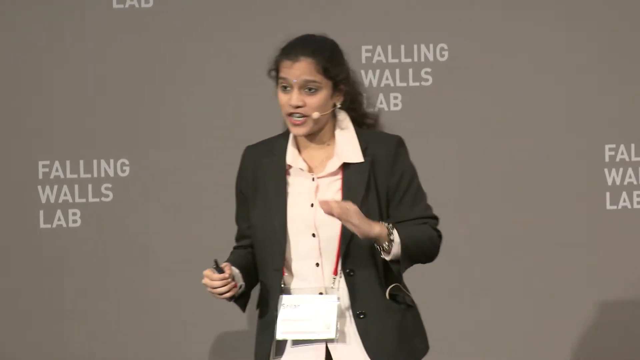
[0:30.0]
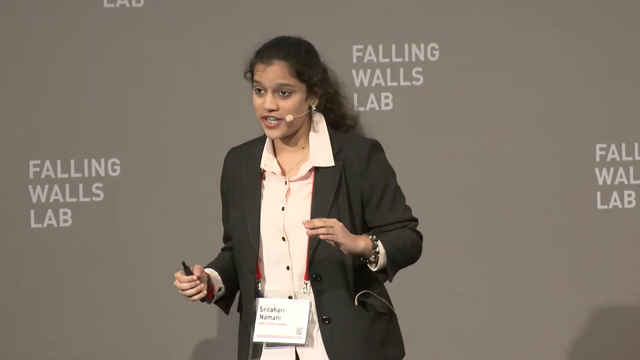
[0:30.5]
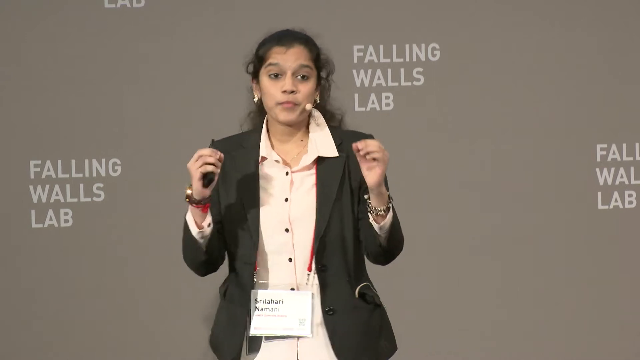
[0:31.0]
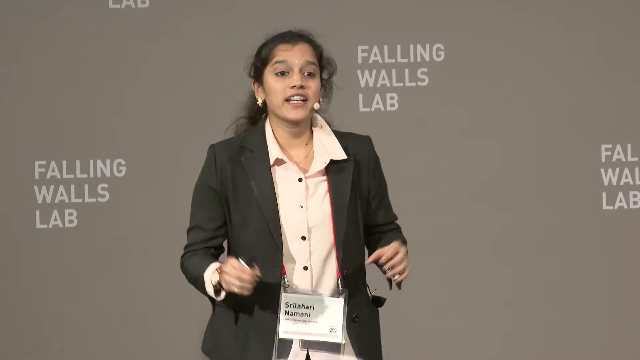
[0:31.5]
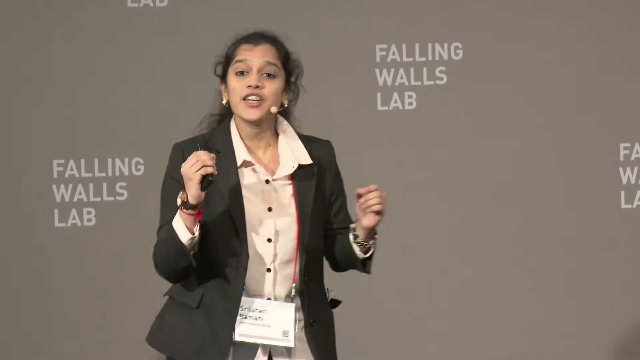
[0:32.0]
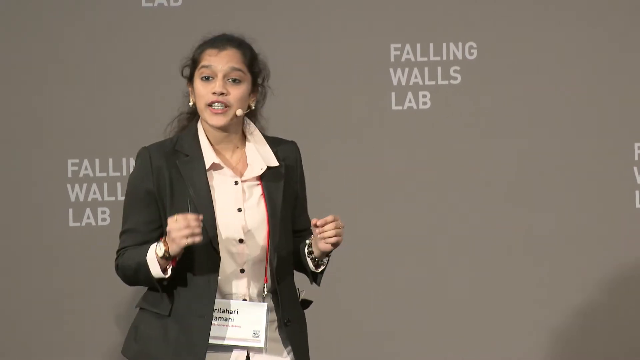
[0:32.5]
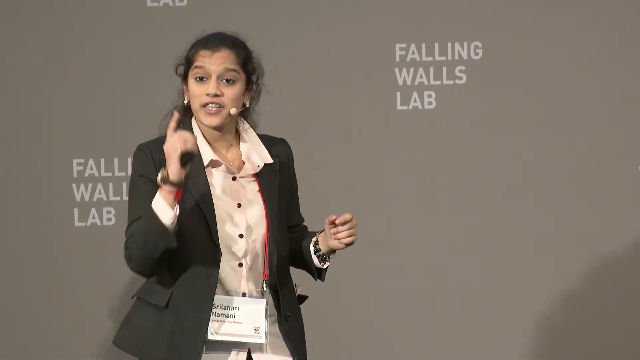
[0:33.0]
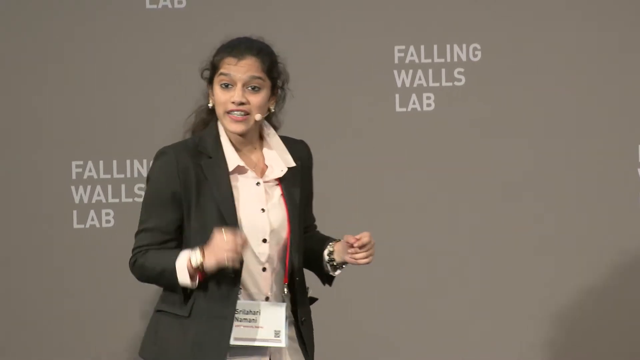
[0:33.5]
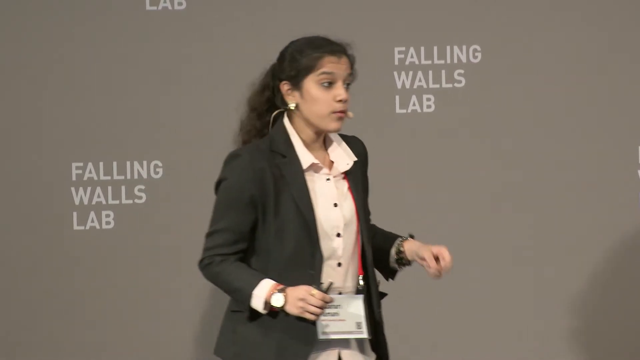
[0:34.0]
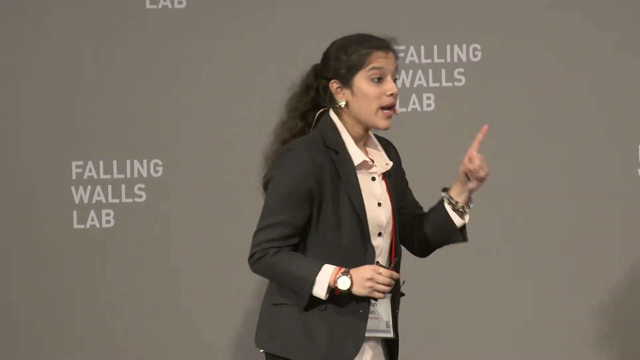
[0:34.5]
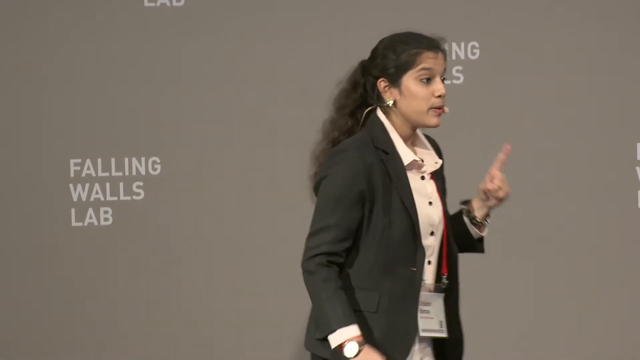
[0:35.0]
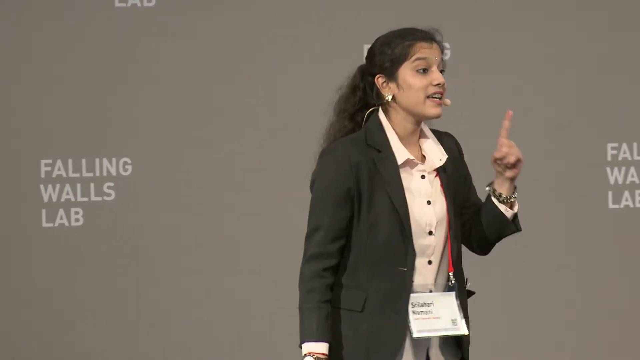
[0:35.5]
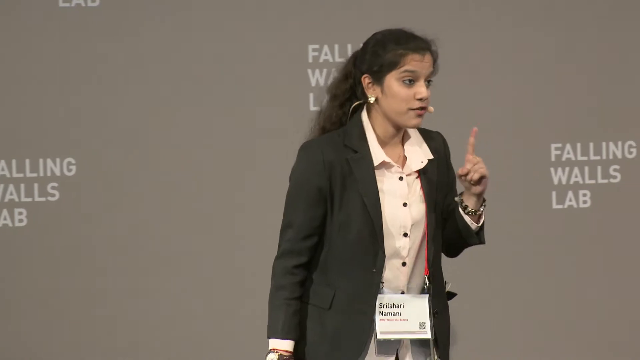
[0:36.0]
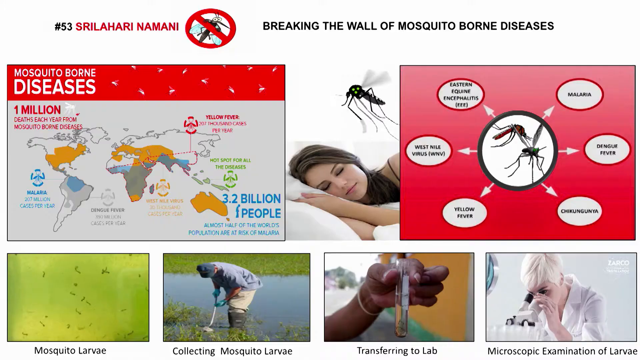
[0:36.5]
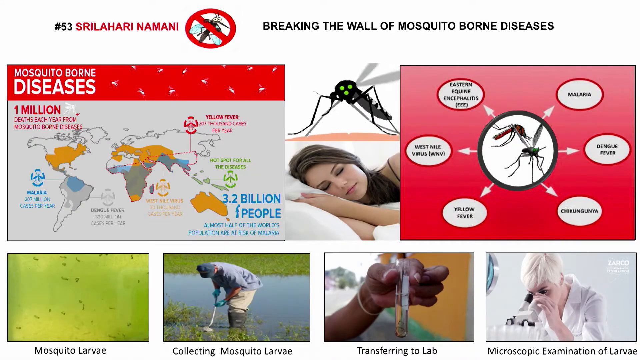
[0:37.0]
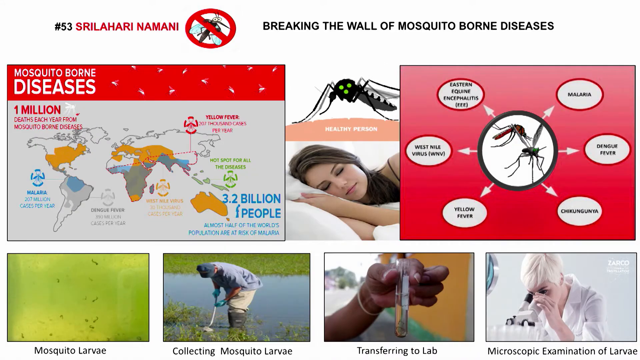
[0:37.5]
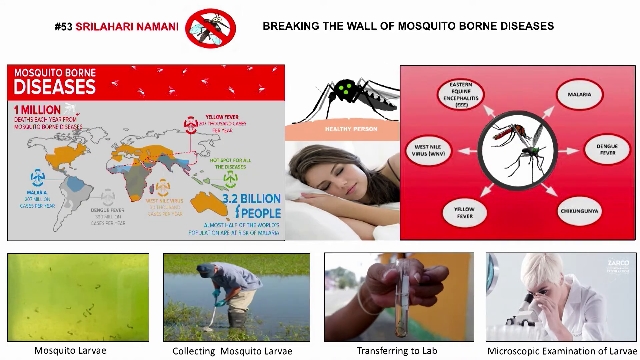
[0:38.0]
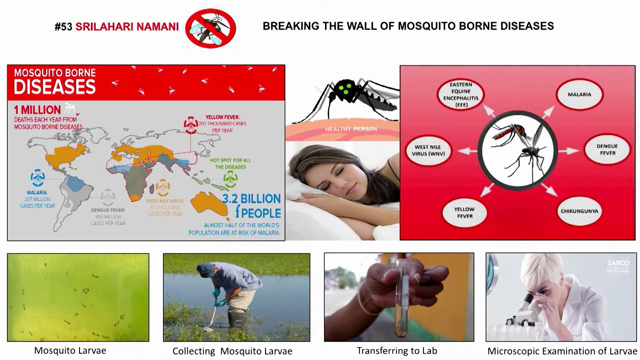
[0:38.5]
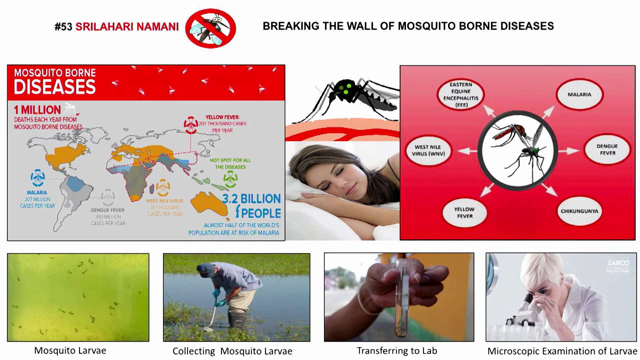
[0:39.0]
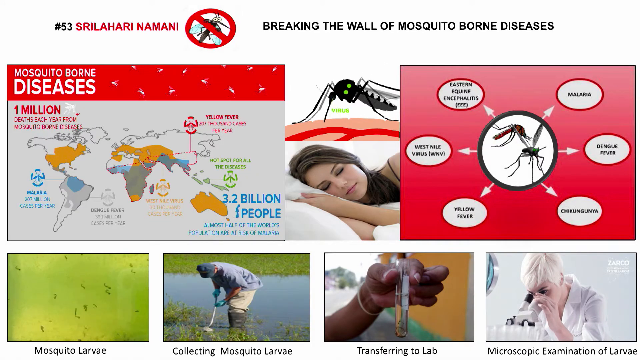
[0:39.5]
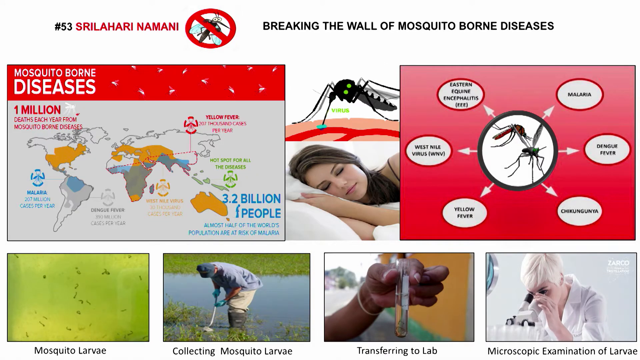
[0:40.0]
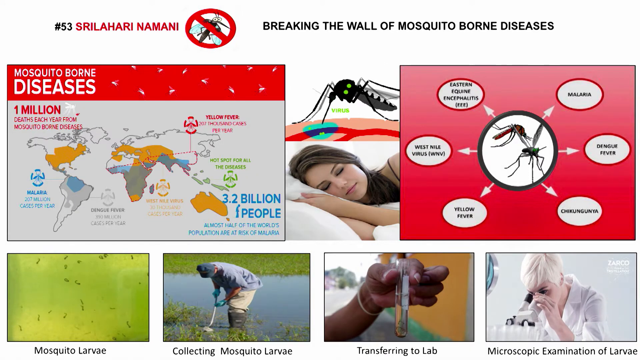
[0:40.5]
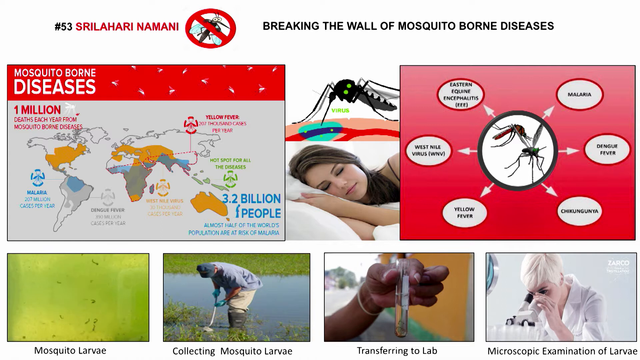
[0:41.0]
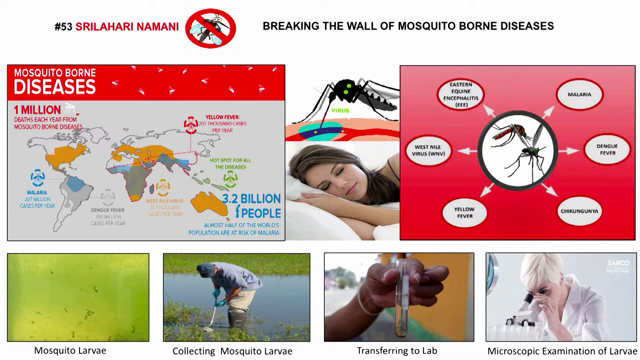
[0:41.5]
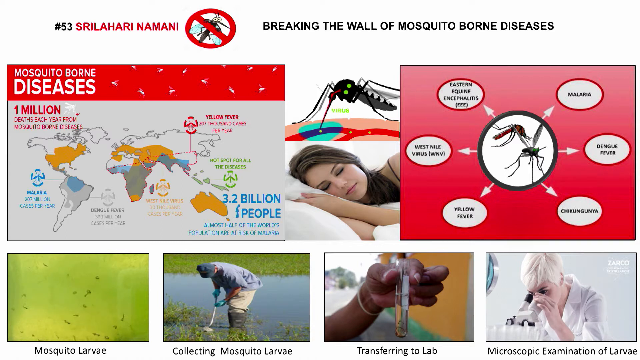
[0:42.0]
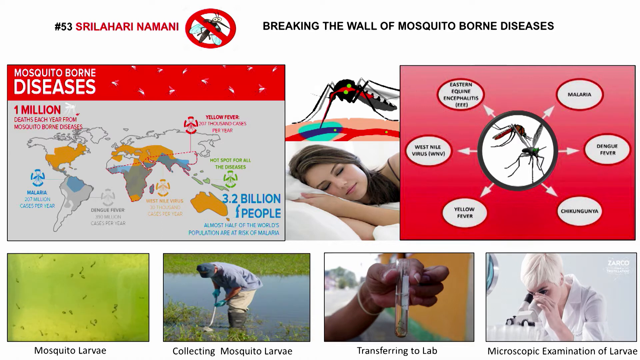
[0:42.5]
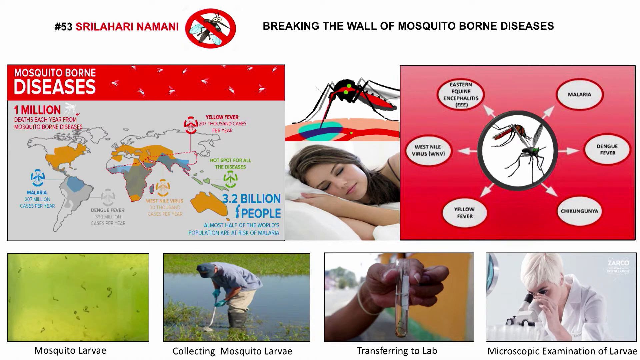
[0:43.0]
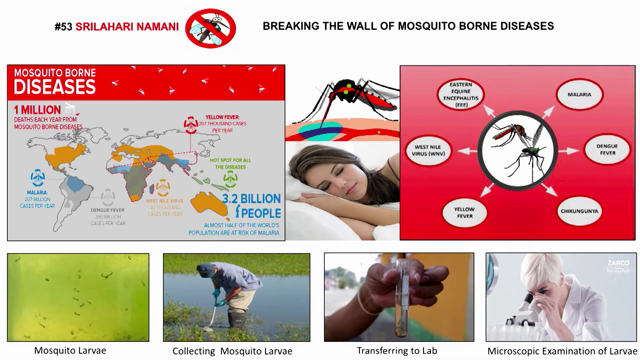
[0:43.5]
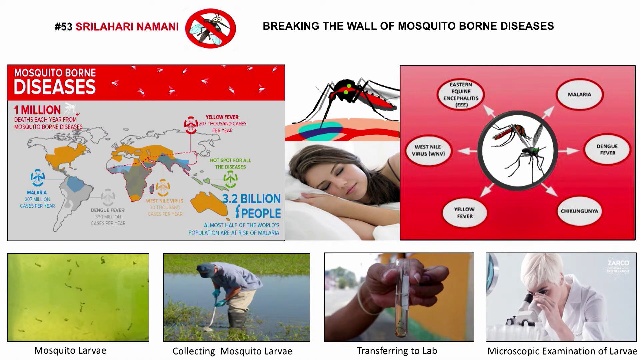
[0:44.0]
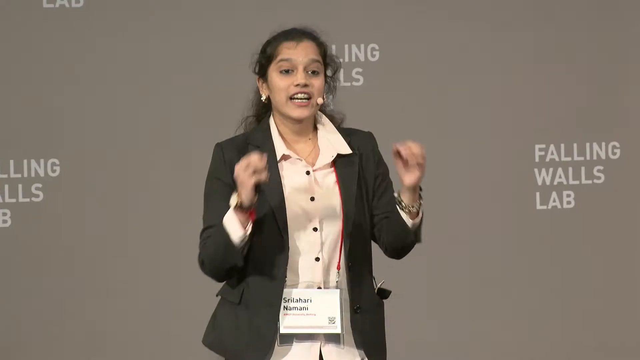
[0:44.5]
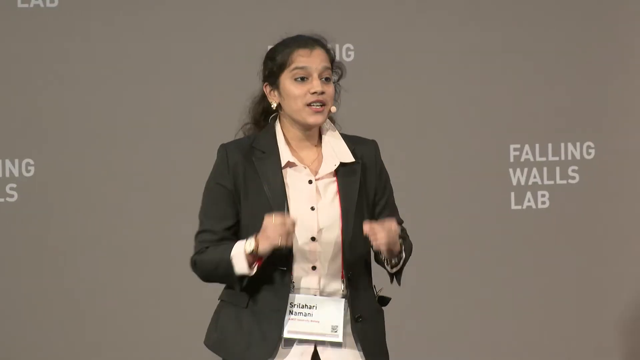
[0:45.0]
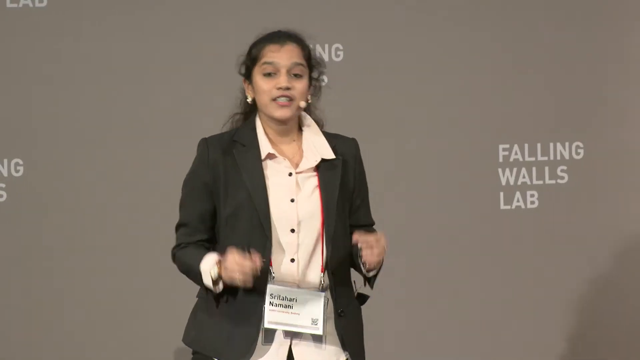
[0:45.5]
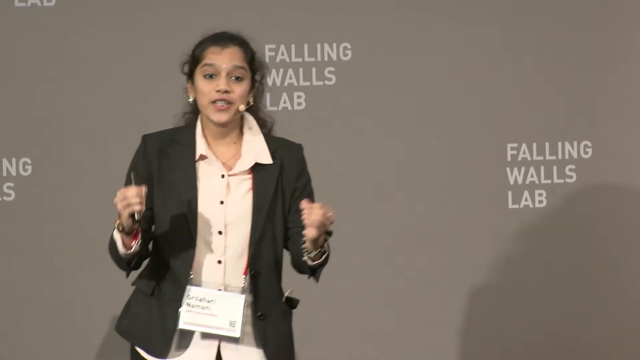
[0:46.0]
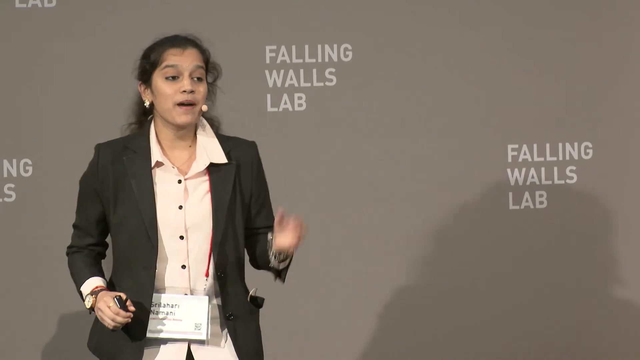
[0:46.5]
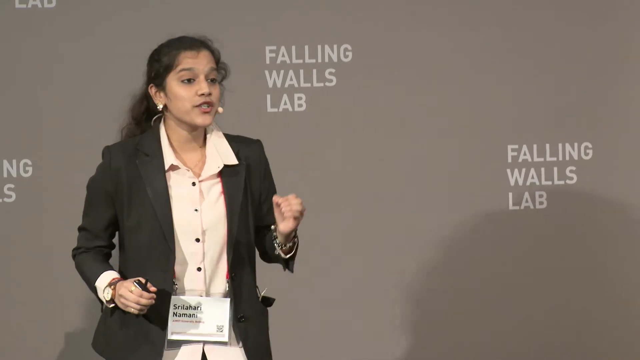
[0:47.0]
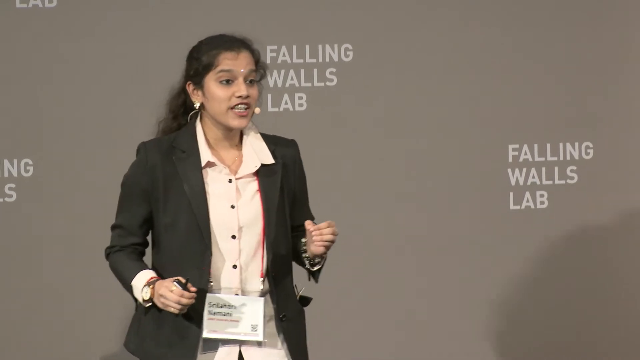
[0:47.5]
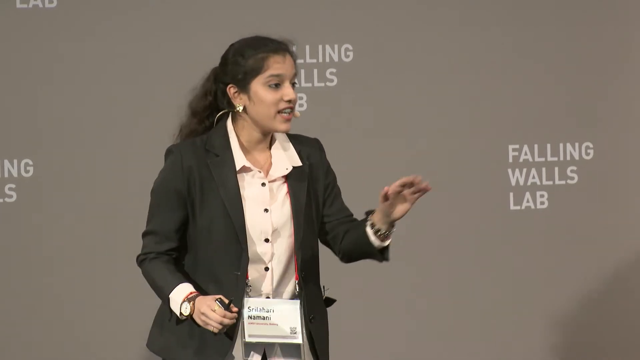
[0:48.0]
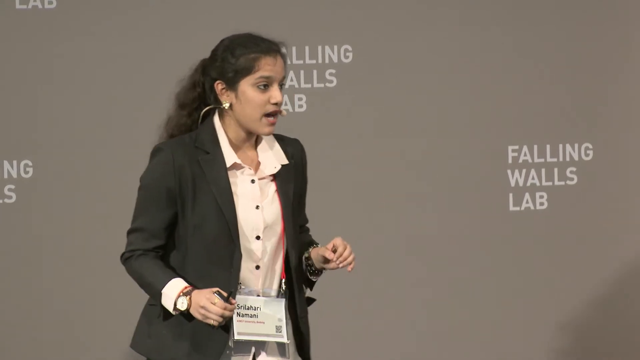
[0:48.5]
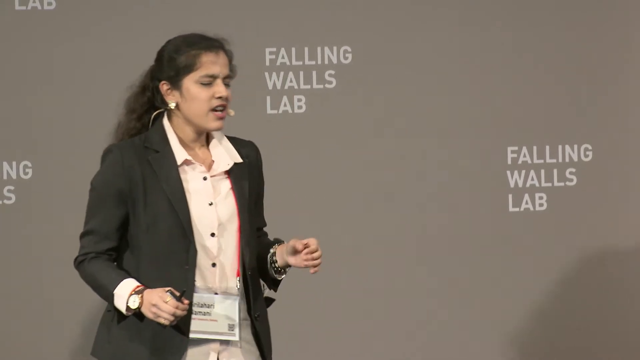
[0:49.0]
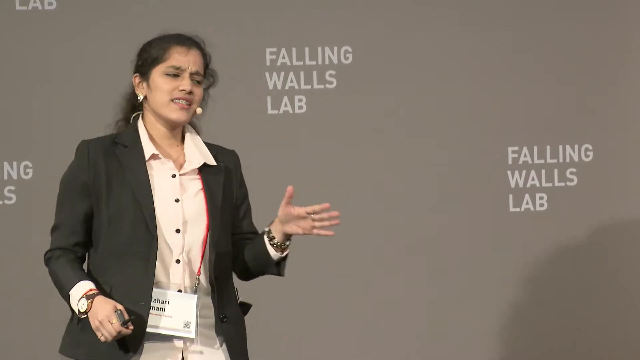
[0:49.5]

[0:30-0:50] A closer shot shows the presenter's upper body. The wall behind her is grey, with "Falling Walls Lab" repeated in several places in light grey all-caps letters: "Falling" on the first line, "Walls" on the second and "Lab" on the third. Four of these spots are visible from this angle and zoom. She possibly appears to be of Indian descent. She has tanned skin and mostly straight black hair tied back, with a slight curl at the front. A cream-coloured mic is fixed to her head, just to the left of her mouth. She wears a pink button-up shirt with black buttons under a black jacket. In her right hand she holds something that looks like a pen. She has a bangle or a watch on her left wrist, and a name tag or some kind of placard hangs on a red lanyard around her neck. She looks very excited and lively as she speaks, gesturing a lot with her left hand.